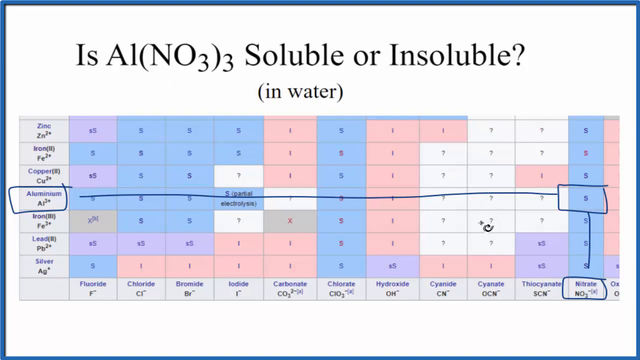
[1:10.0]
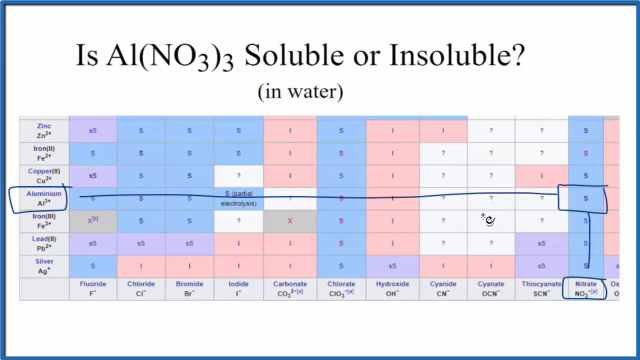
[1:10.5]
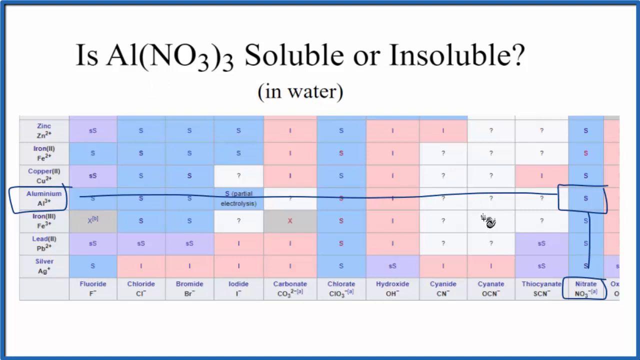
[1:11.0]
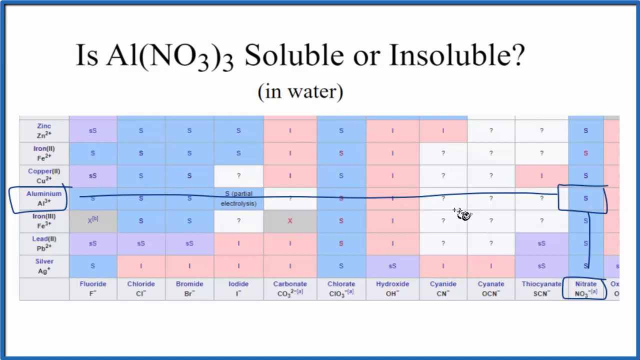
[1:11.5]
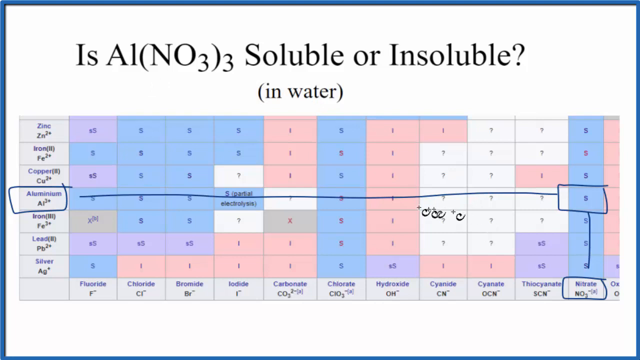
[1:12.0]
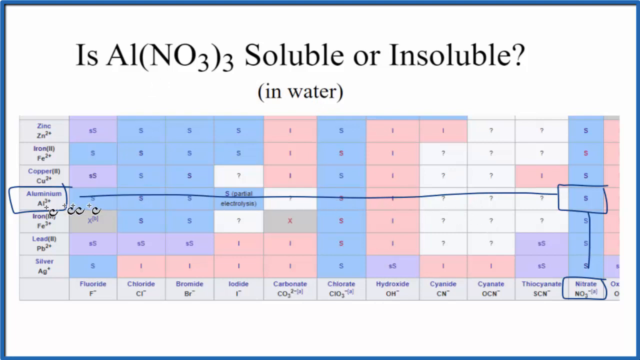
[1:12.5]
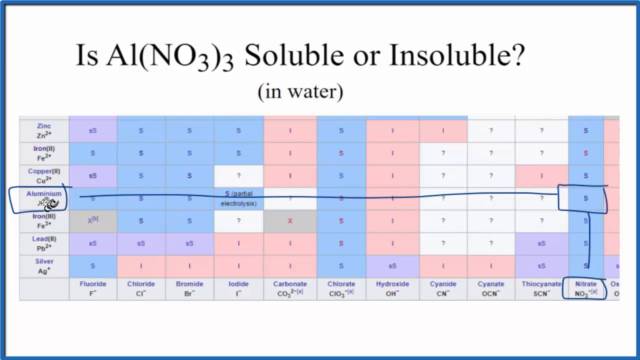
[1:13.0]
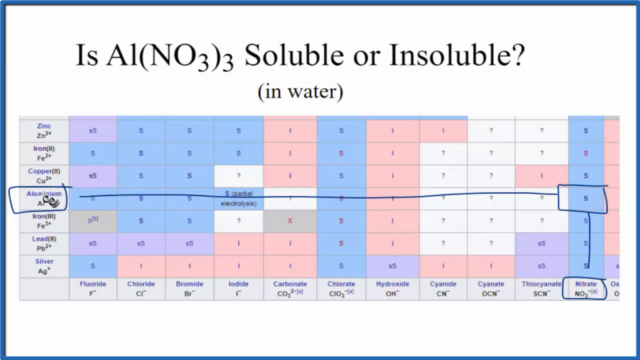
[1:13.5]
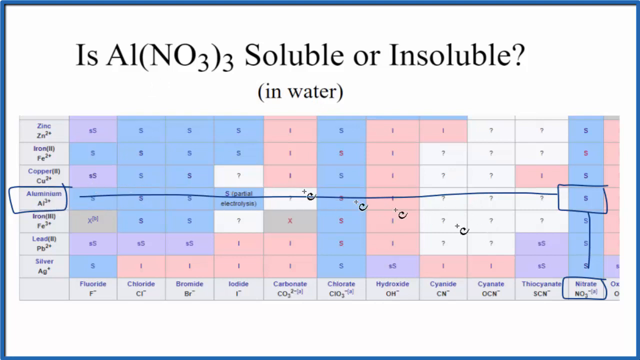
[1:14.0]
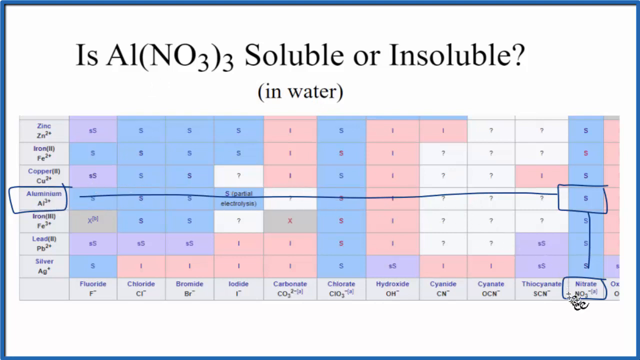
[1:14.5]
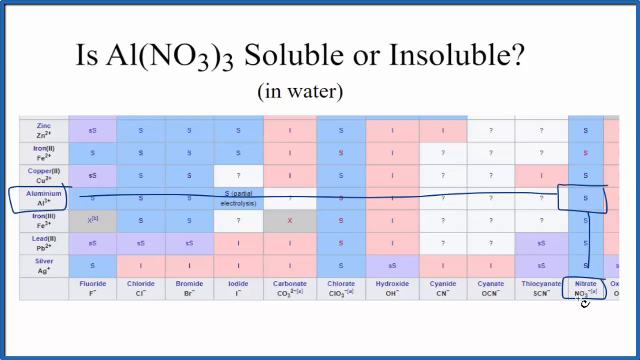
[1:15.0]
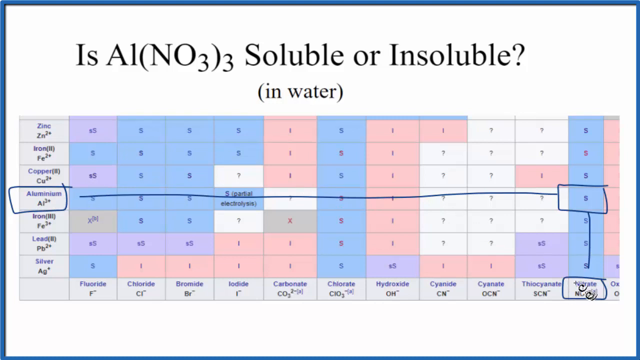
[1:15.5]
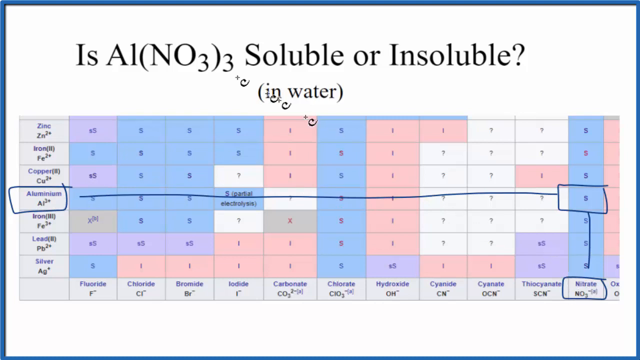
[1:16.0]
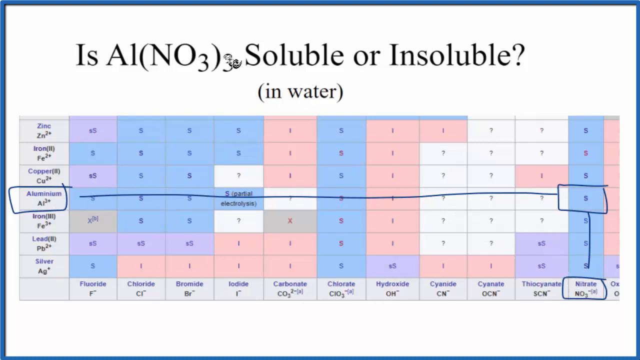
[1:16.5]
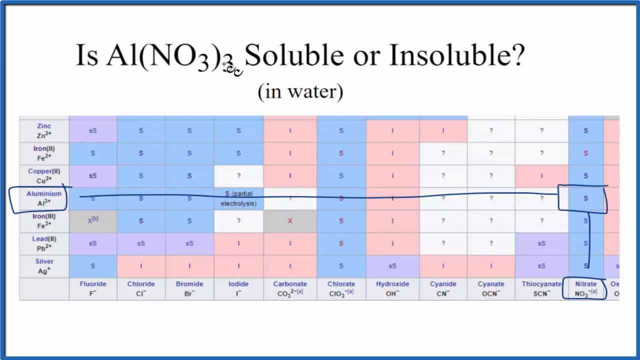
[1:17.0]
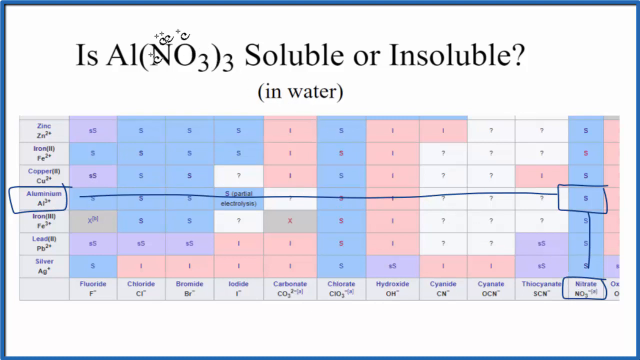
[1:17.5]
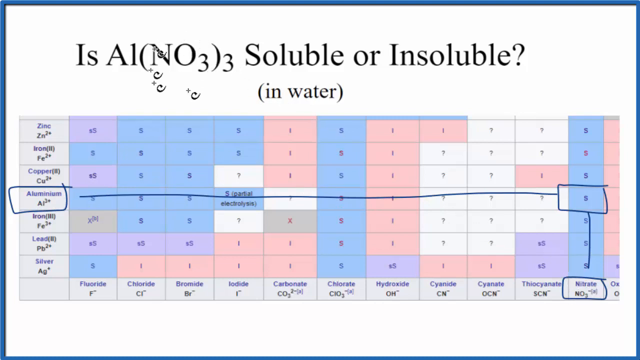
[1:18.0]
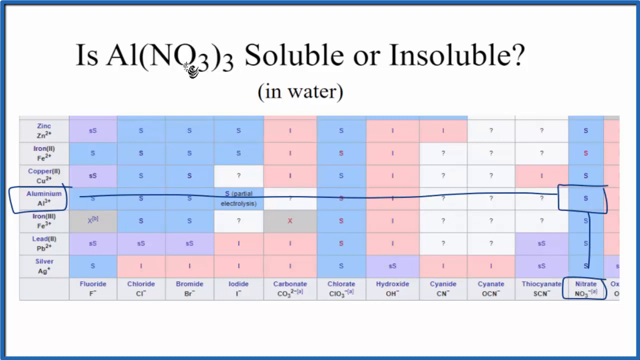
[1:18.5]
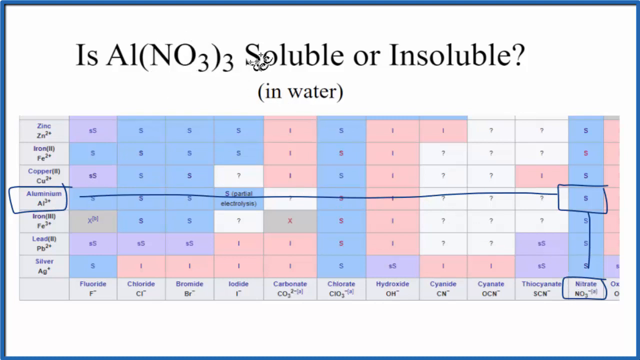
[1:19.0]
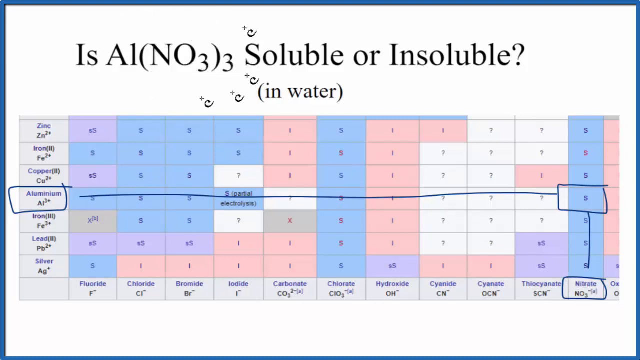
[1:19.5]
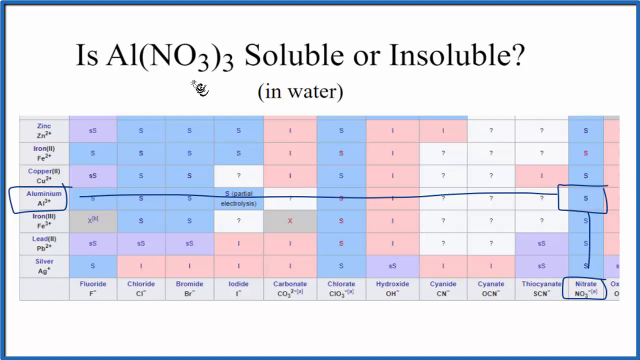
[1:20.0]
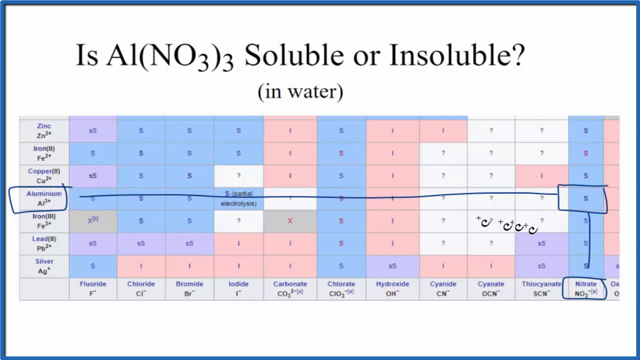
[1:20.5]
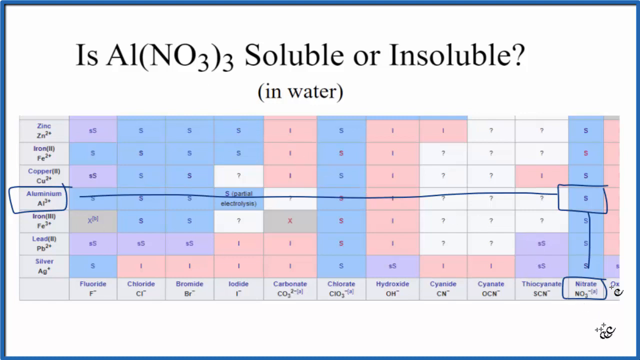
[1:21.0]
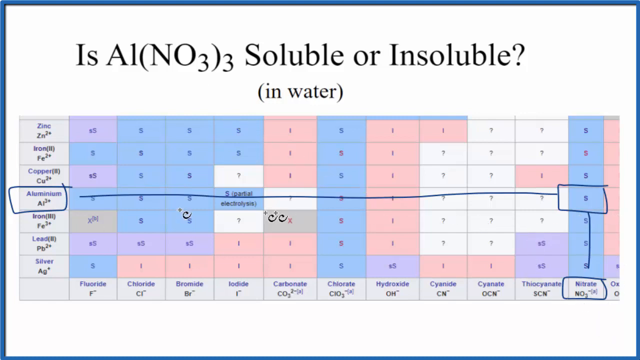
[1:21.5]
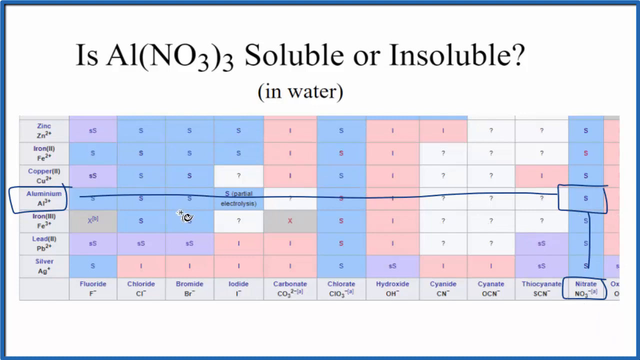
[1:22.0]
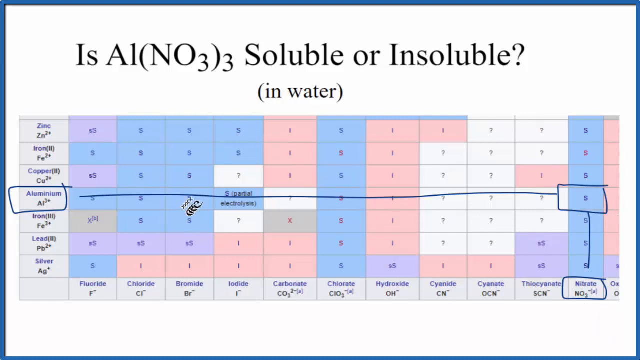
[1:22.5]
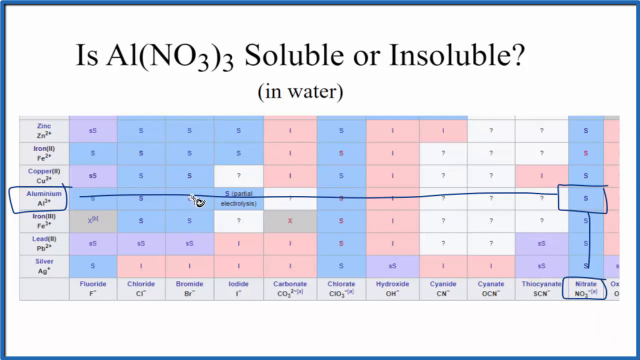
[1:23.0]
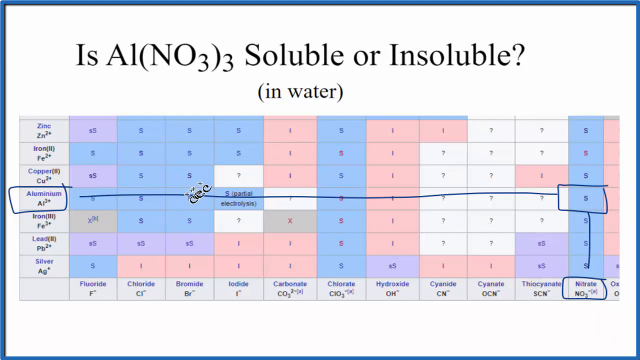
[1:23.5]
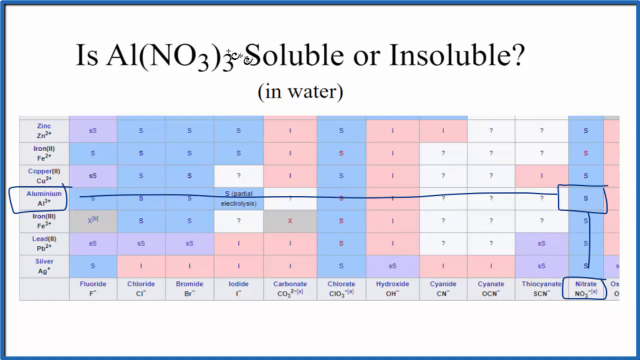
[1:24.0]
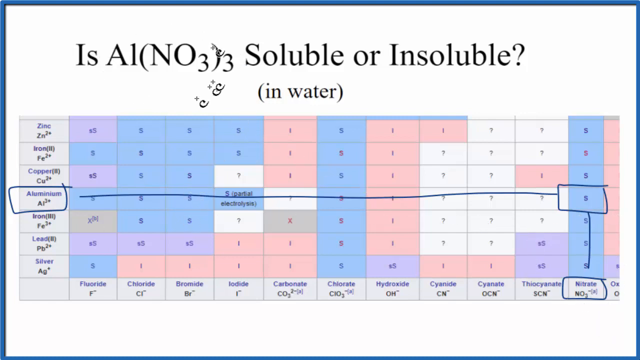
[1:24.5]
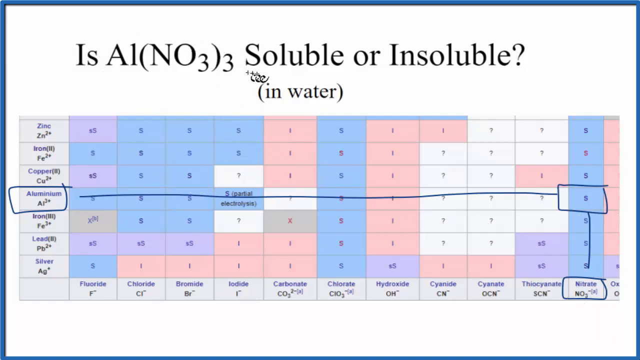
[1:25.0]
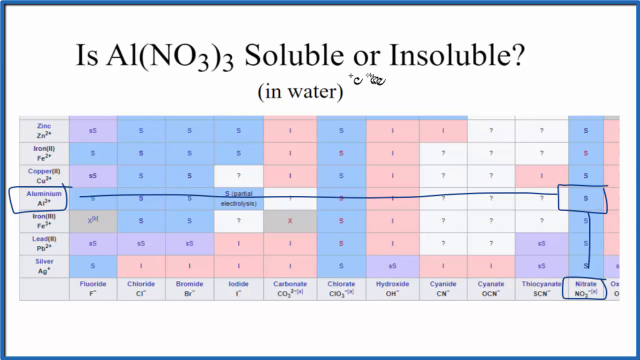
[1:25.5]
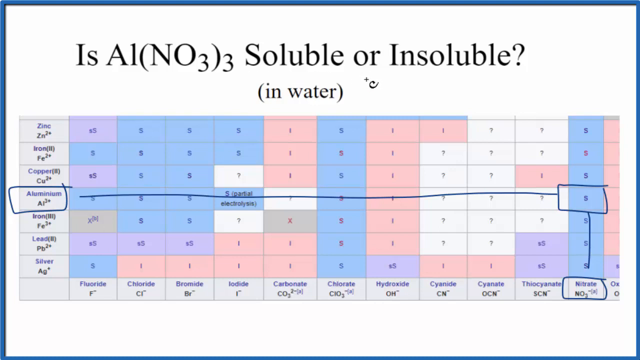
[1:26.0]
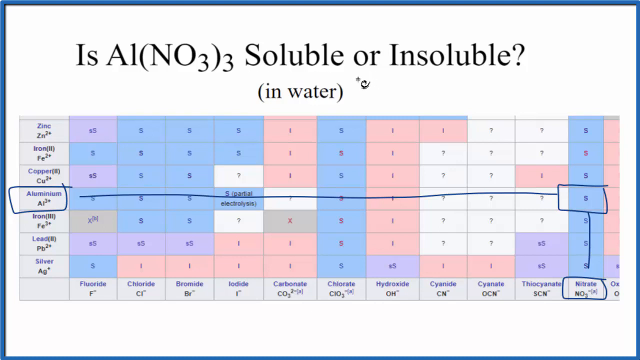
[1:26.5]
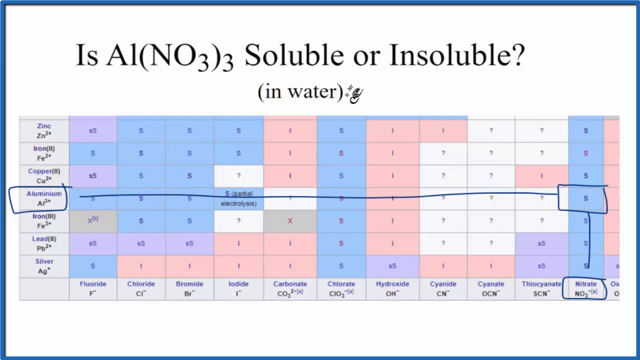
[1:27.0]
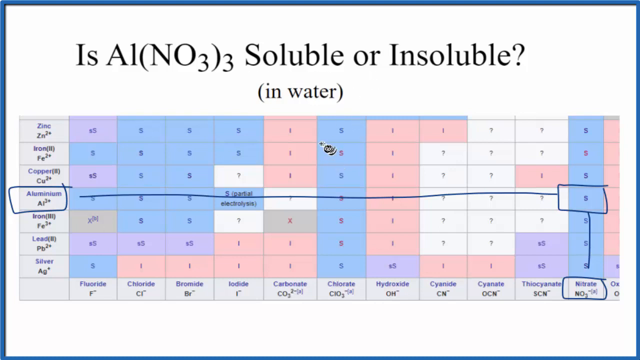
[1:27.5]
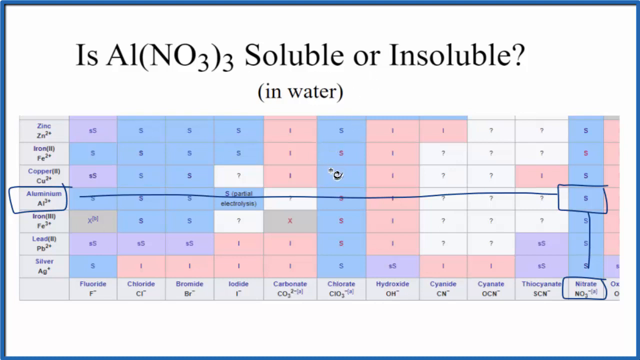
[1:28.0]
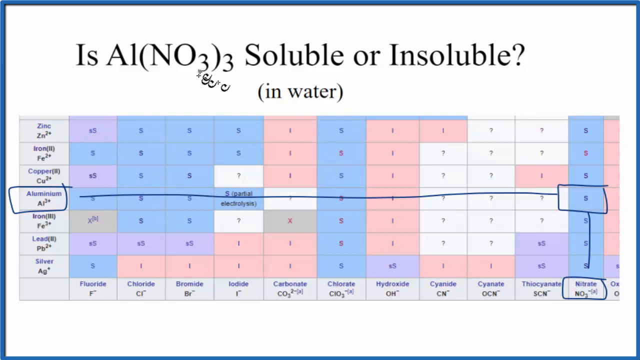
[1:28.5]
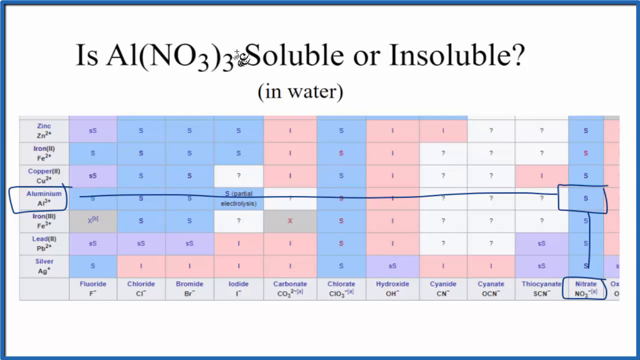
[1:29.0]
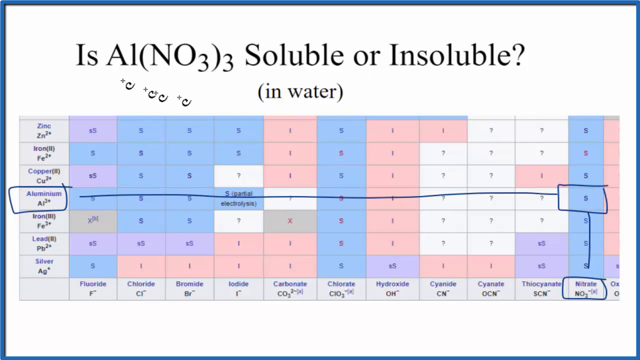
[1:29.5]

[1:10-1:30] The cursor hovers over what appear to be two question marks in the table, in the row below the aluminium row, which is iron. It then zooms back to aluminium and across to nitrate, circles NO3 several times, rests on a couple of different places in the table, and goes back up to frantically circle NO3 again. The cursor rushes around very quickly and spends a lot of time circling NO3.